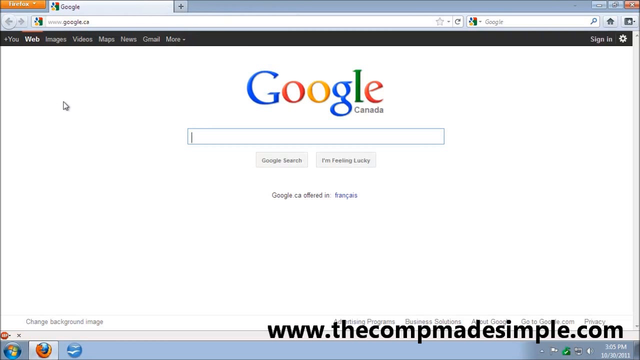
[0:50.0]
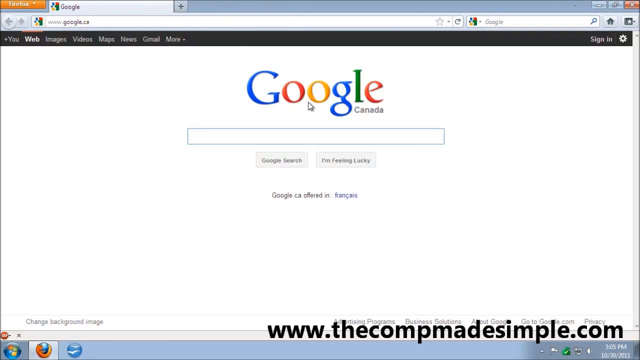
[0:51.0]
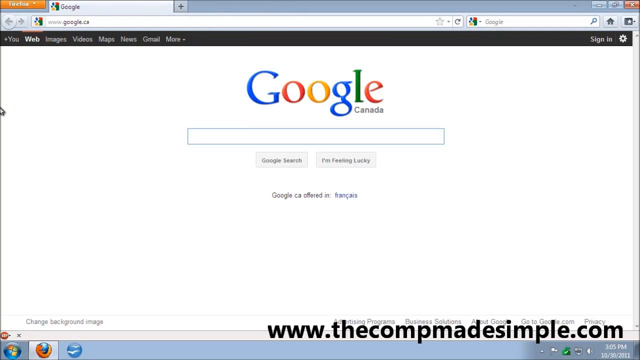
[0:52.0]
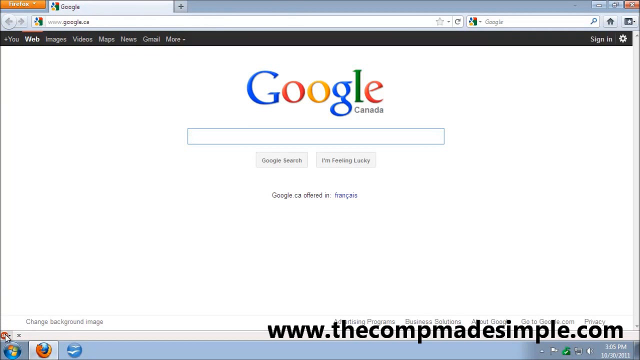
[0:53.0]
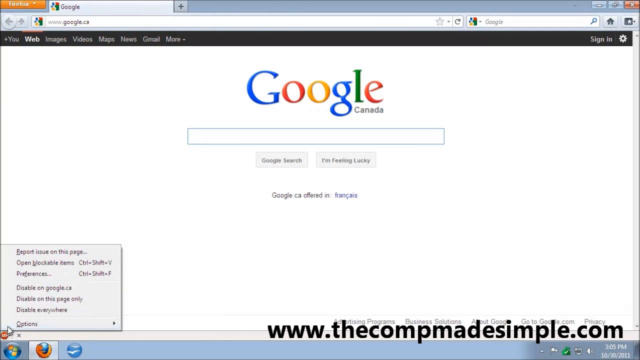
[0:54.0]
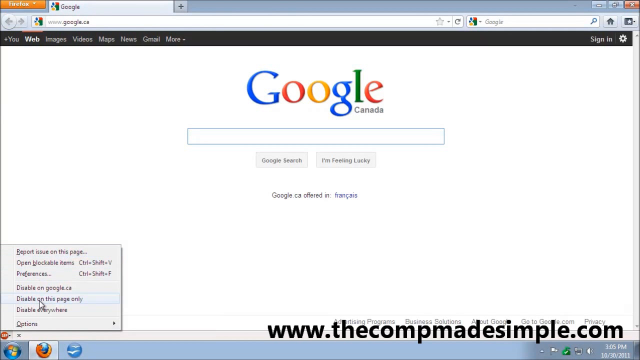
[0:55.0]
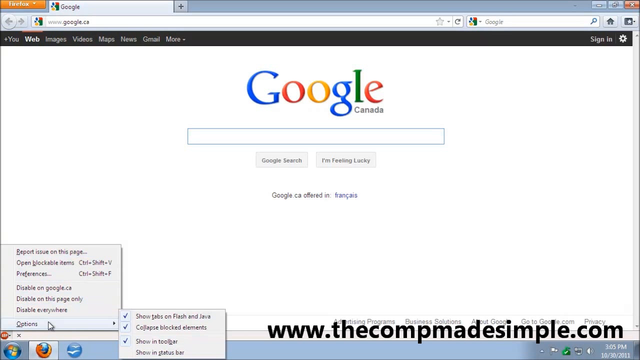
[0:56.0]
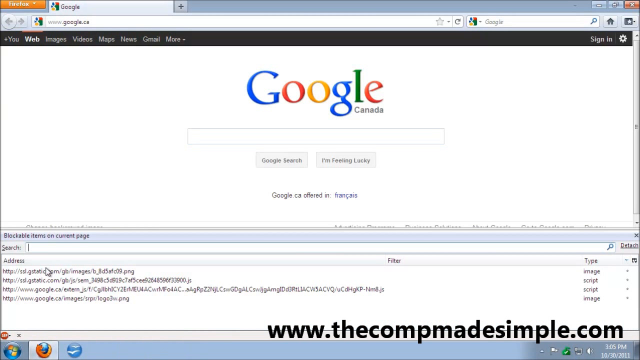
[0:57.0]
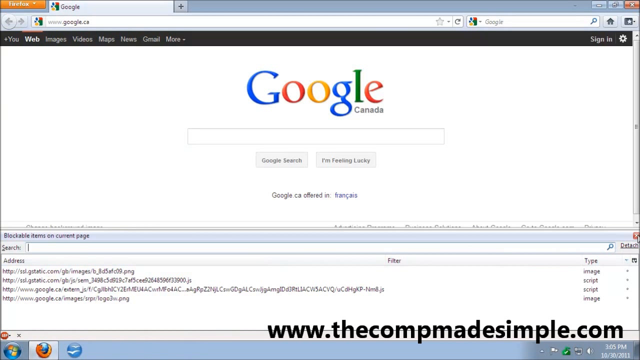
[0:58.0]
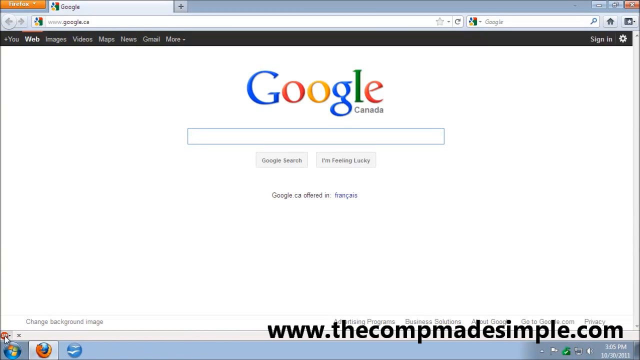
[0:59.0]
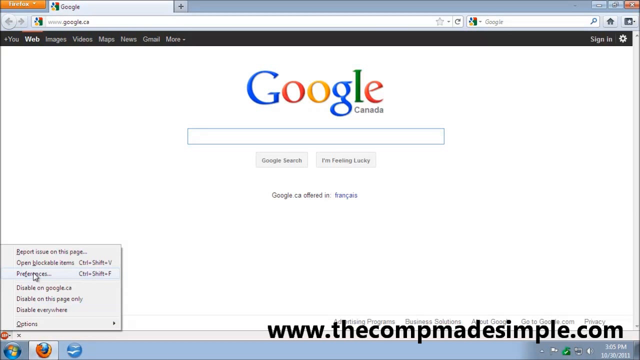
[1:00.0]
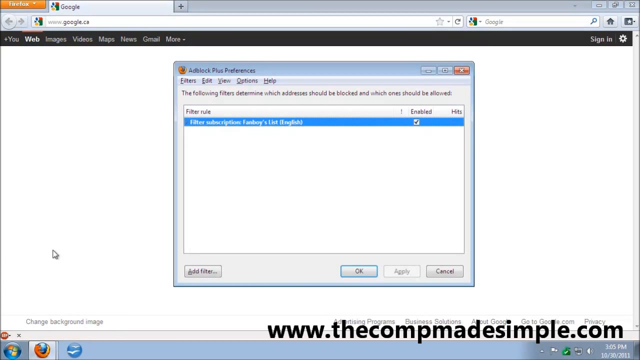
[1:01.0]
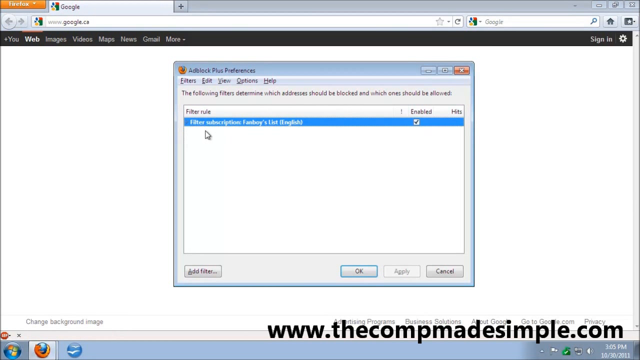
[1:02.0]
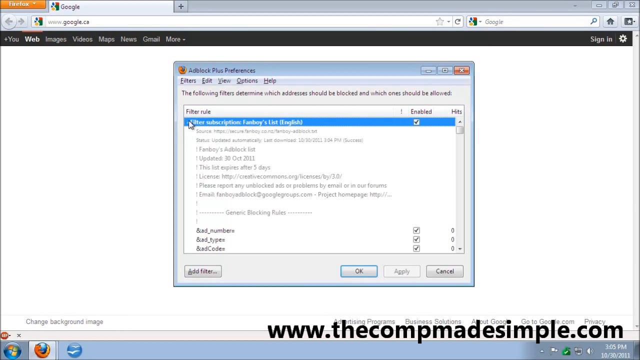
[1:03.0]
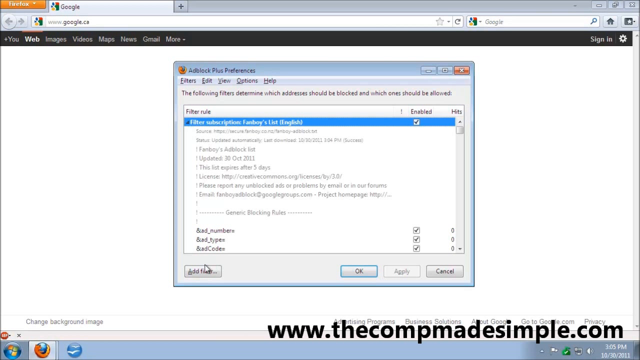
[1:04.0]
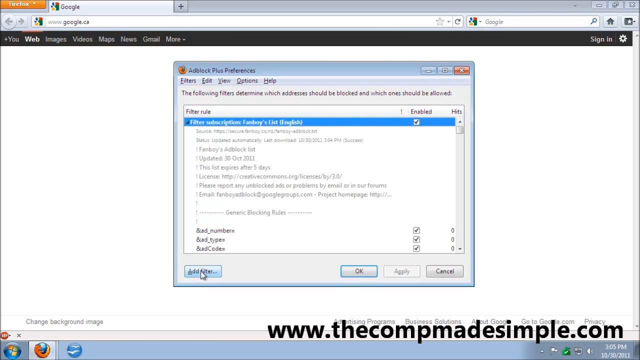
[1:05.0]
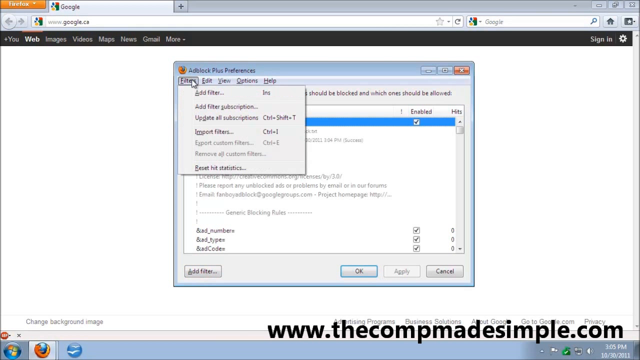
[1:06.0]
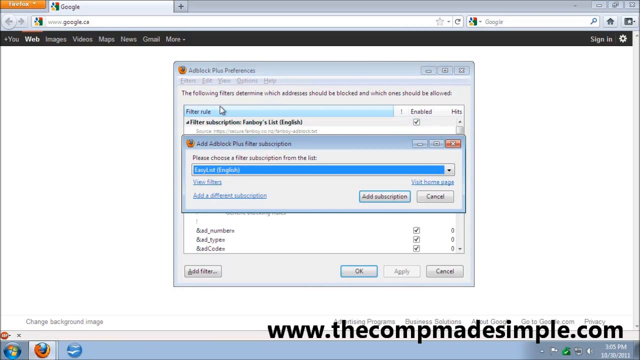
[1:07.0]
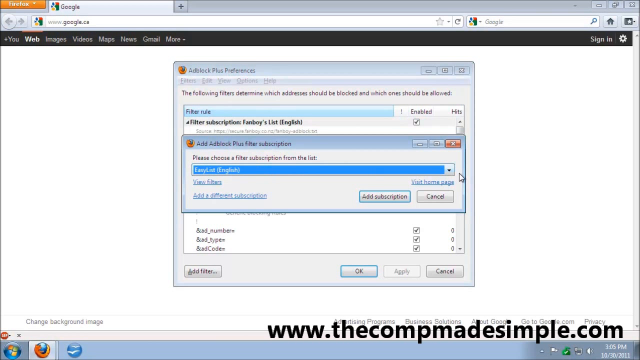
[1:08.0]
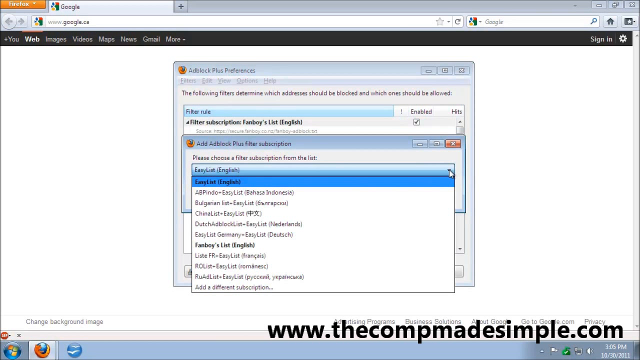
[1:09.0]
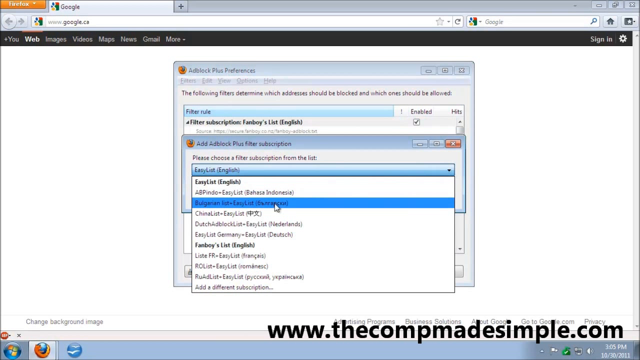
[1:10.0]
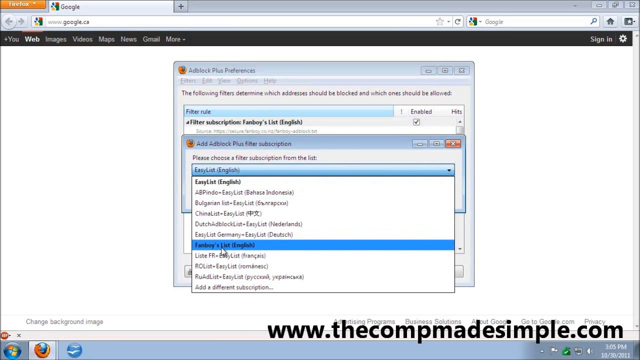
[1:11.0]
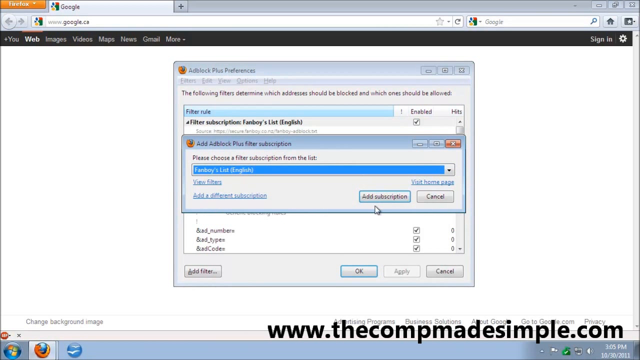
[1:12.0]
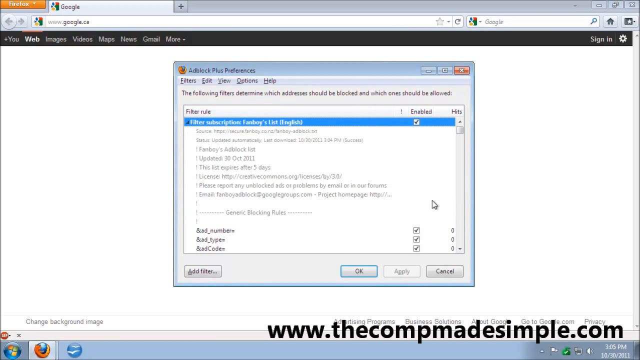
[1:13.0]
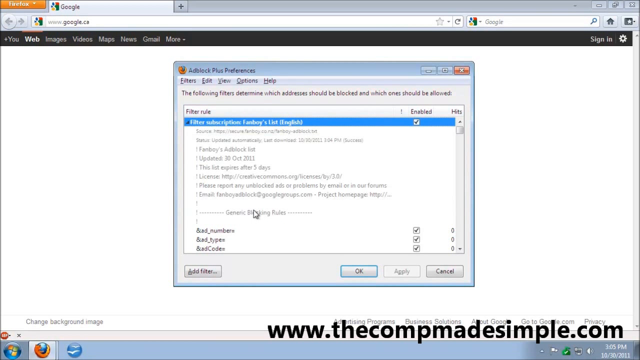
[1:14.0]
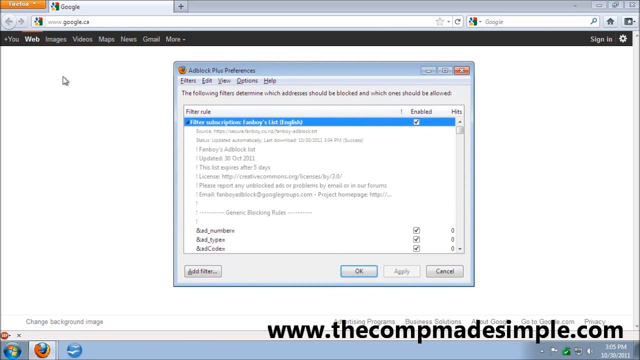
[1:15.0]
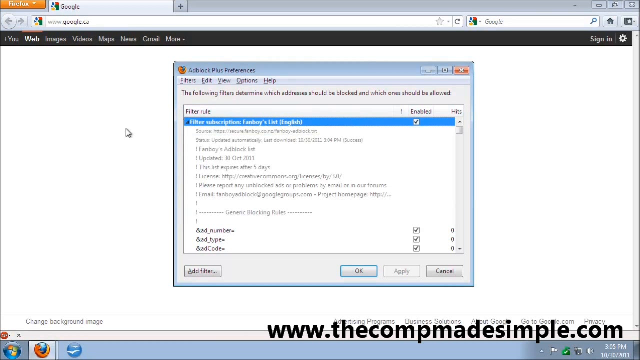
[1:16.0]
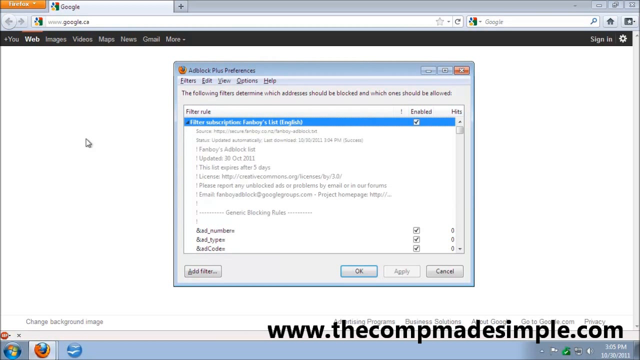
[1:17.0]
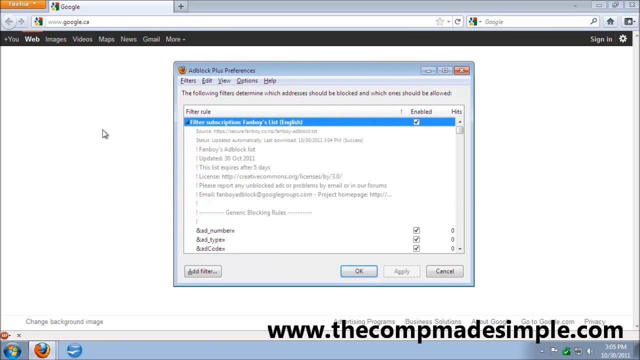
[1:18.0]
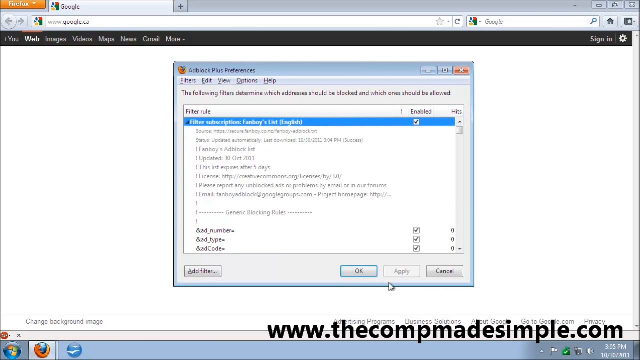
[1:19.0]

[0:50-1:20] The Google Canada search engine page at google.ca is open. The mouse pointer moves around the top part of the screen and then over to the bottom left, where it clicks on the AdBlock Plus add-on, and then preferences is clicked. The pointer moves around the AdBlock Plus preferences box, which shows the filter rules. A rule apparently gets added and is highlighted in blue in the window. The user clicks the filter, highlighting it in blue, and then clicks add new filter; the added filter appears to be the fanboy list filter.